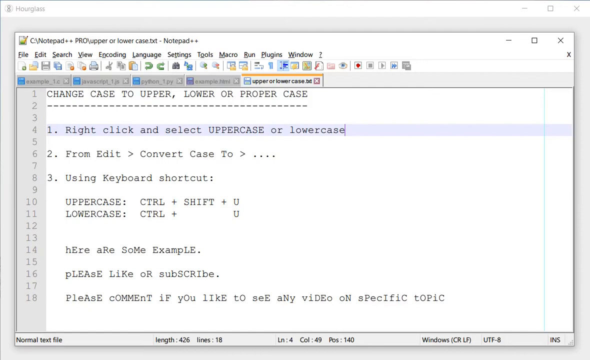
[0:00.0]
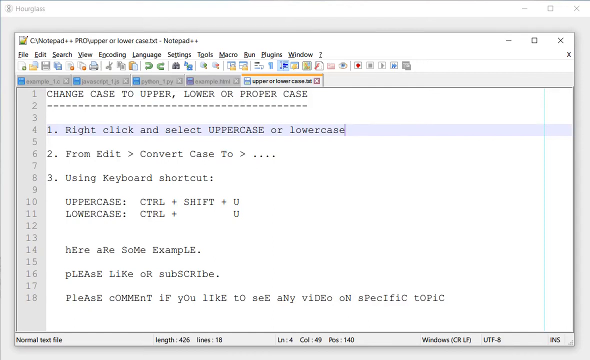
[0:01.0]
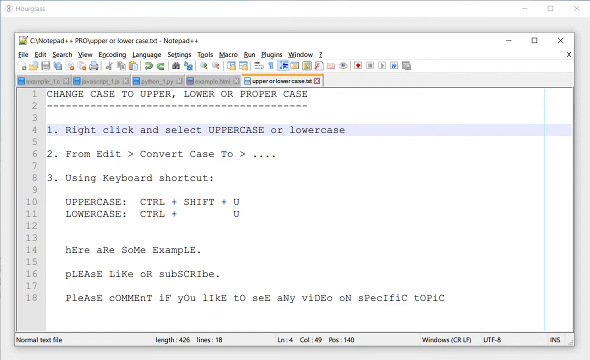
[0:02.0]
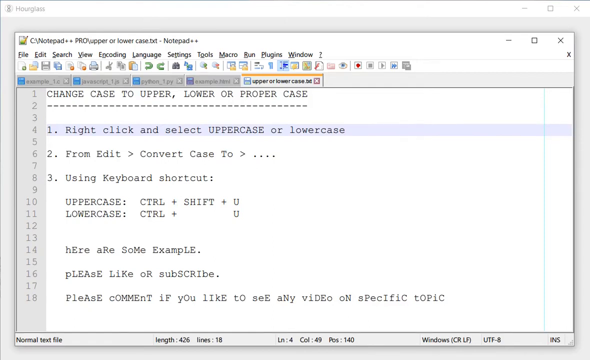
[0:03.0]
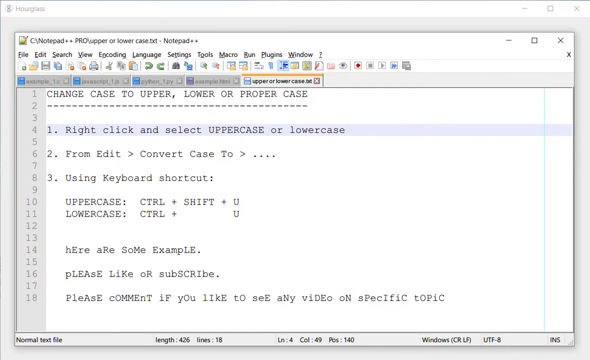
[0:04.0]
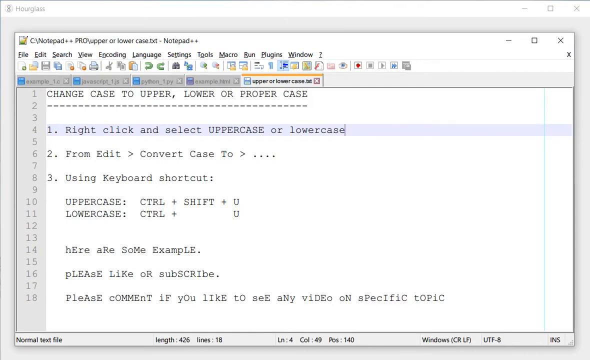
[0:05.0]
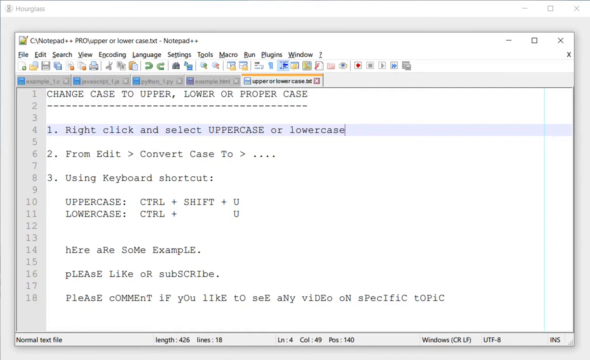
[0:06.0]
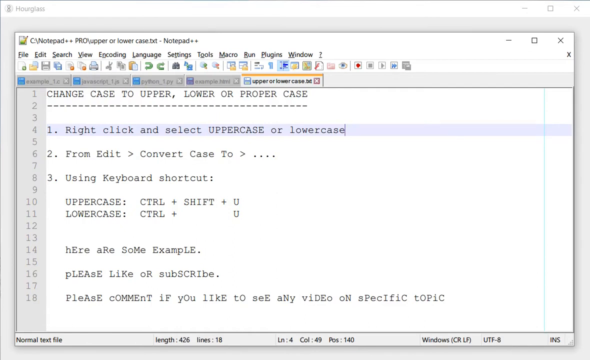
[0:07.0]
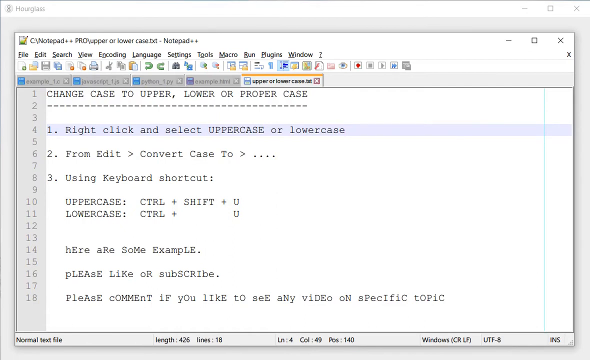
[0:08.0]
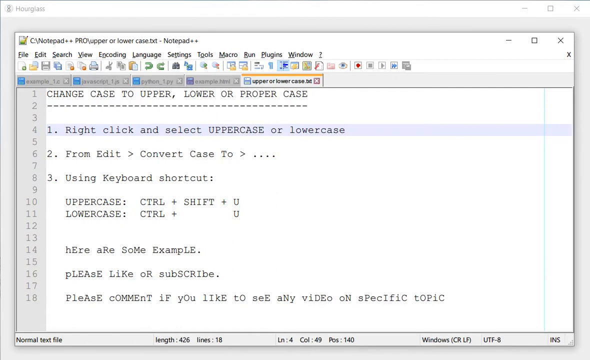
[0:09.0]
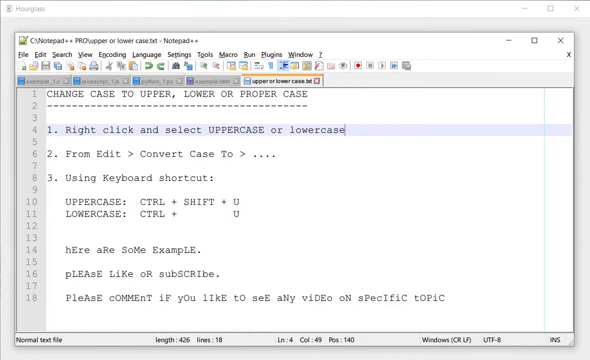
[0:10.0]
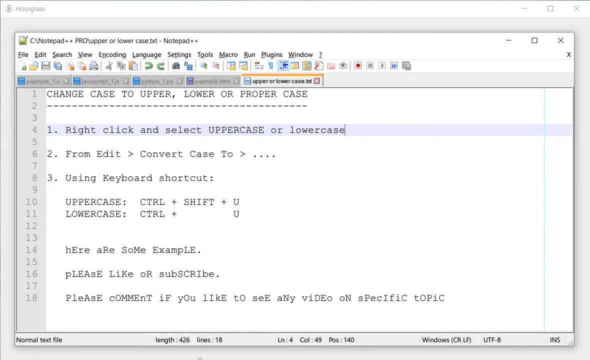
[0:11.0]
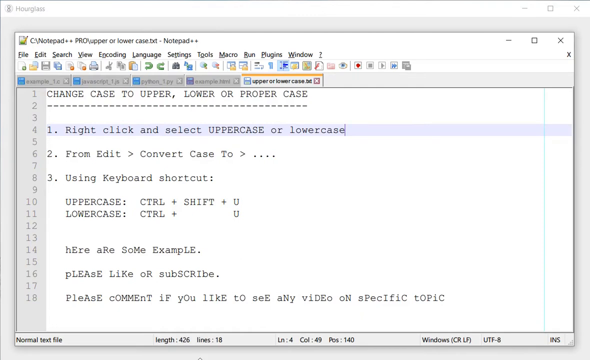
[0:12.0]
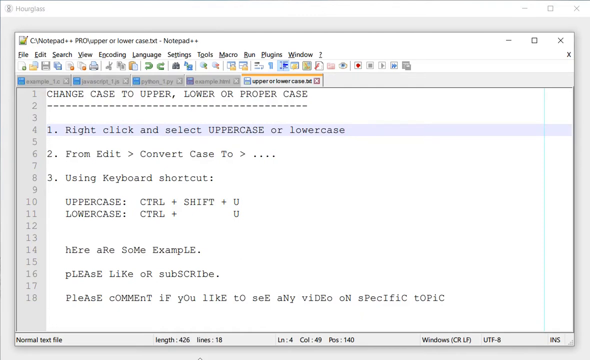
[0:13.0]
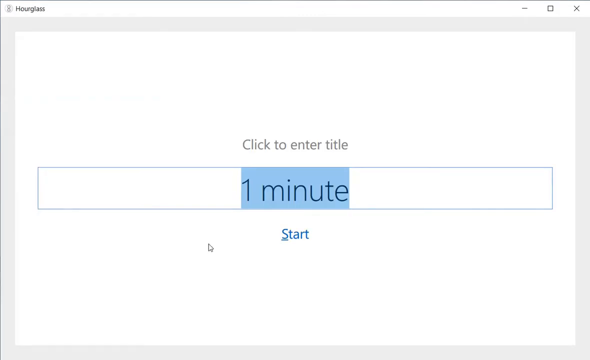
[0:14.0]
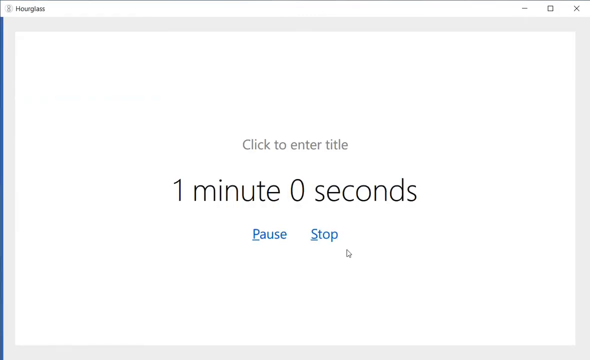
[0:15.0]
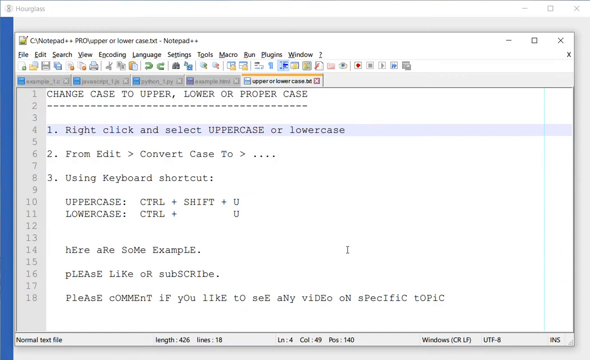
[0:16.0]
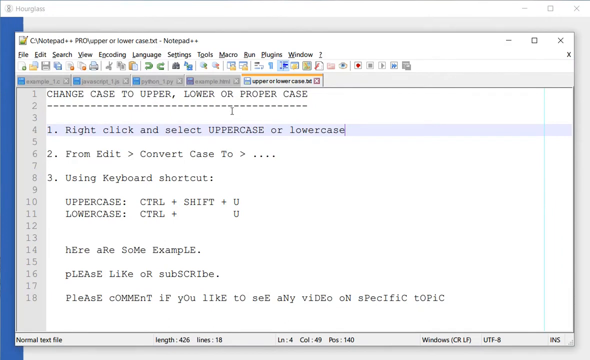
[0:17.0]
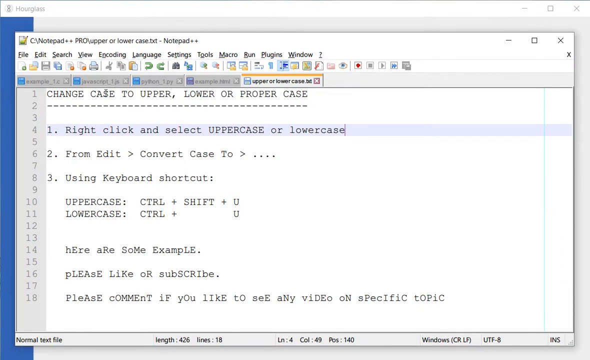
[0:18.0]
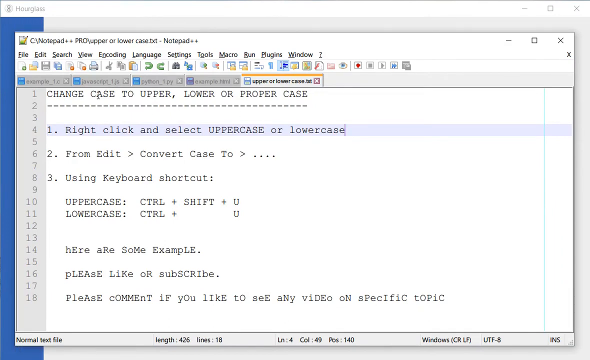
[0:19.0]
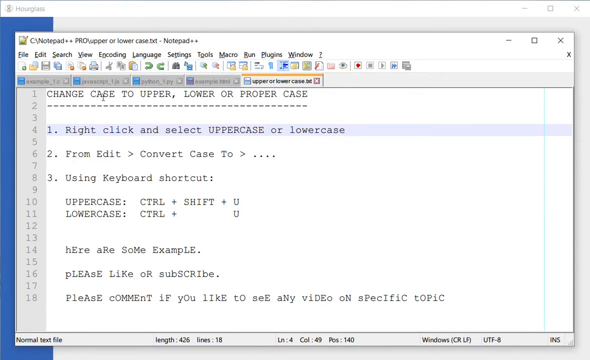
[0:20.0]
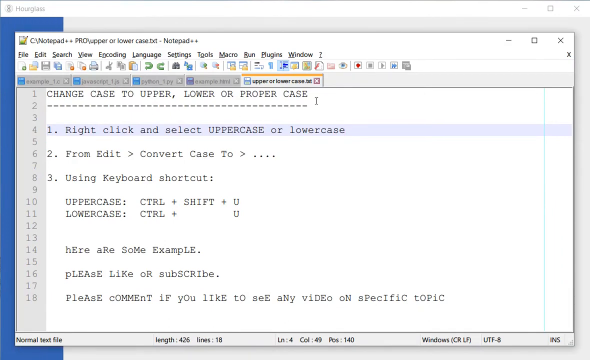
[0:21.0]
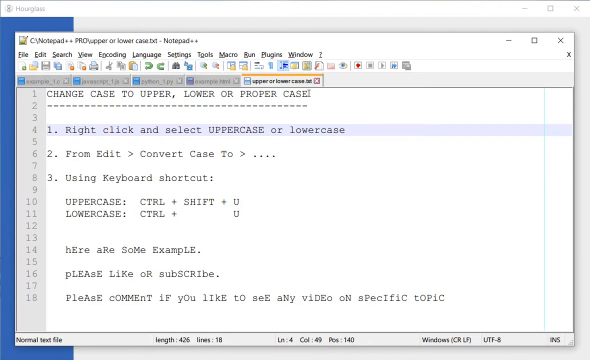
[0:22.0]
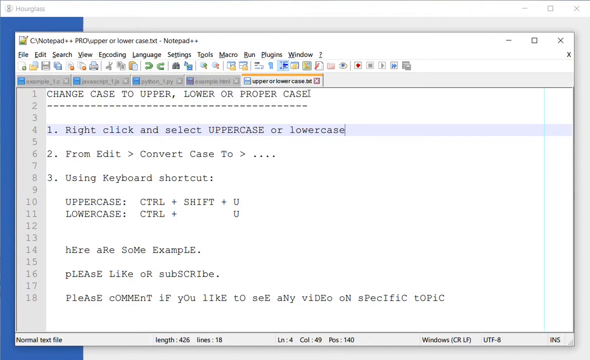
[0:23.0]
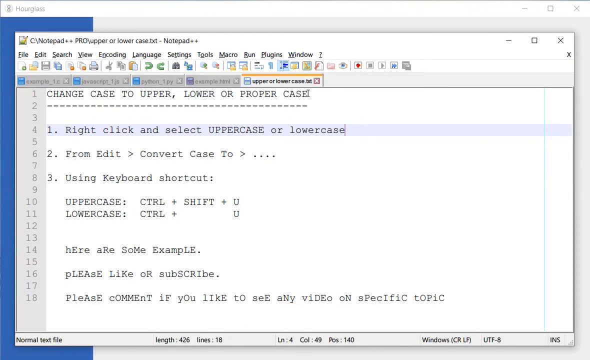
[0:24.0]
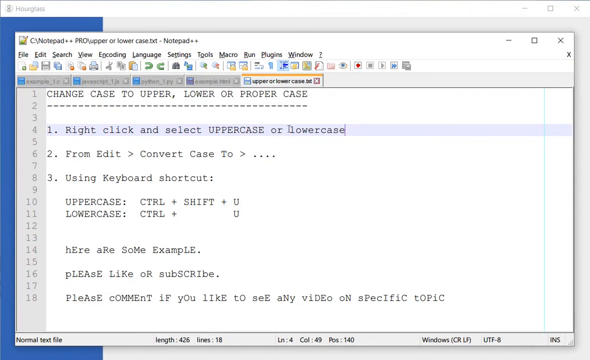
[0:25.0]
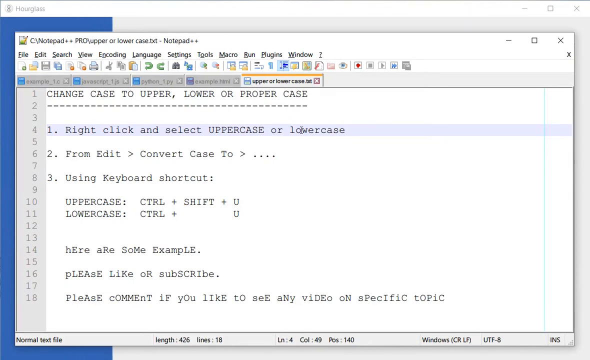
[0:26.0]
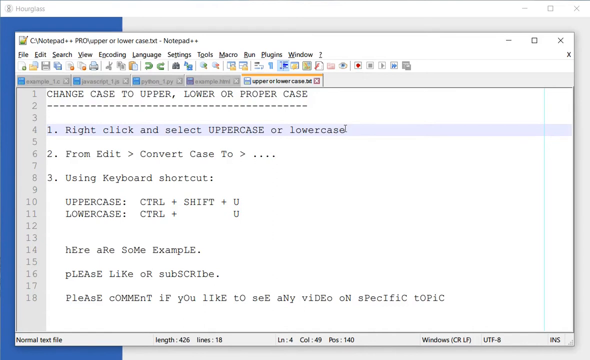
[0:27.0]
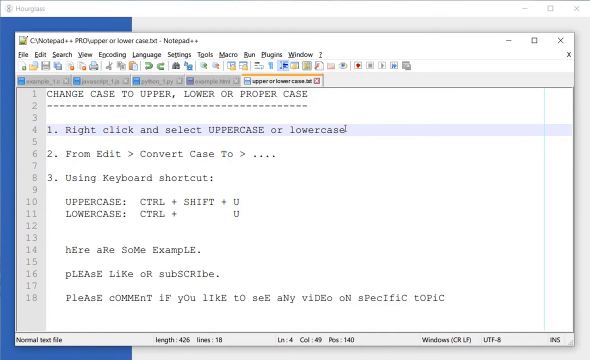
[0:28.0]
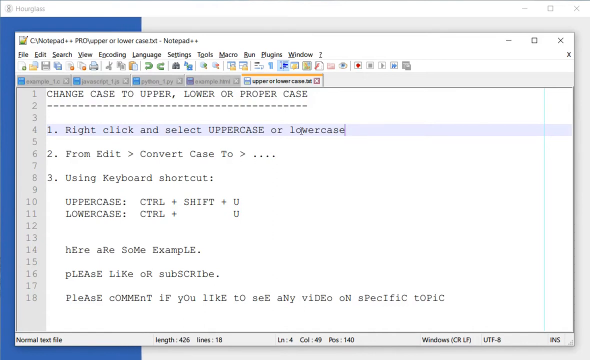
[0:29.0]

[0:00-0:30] A Notepad text file is shown with instructions on using keyboard shortcuts to change text case to upper, lower, or proper case. The file reads "right click and select upper case or lower case from edit convert case to using keyboard shortcuts. Upper case is control shift U, lower case is control plus U. Here are some examples. Please like or subscribe. Please comment if you like. If you see any video on a specific topic". The presenter moves the mouse cursor around a bit, doing different things. The view briefly pops over to a website, where the presenter seems to set a one-minute timer, causing a graphic in the background to load a blue bar that moves slowly from left to right. The video is a tutorial on changing words to upper case or lower case.